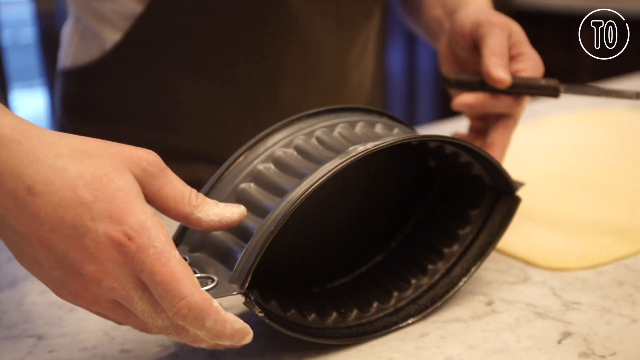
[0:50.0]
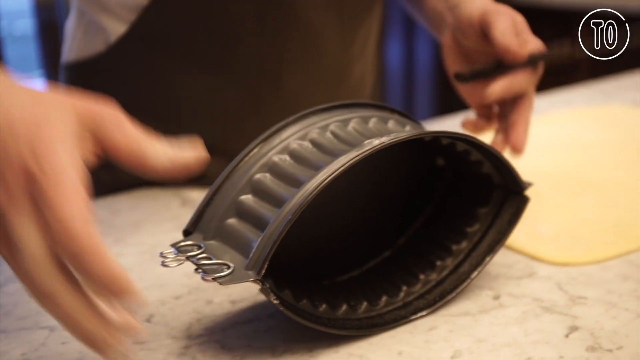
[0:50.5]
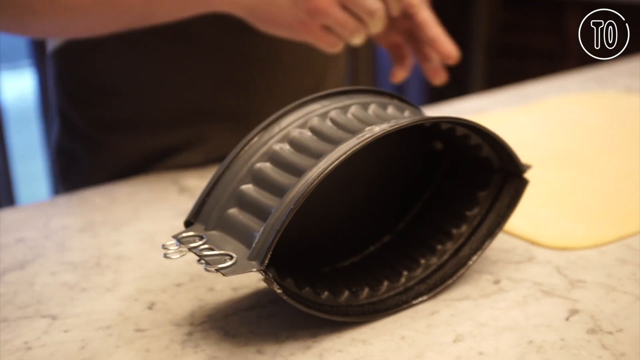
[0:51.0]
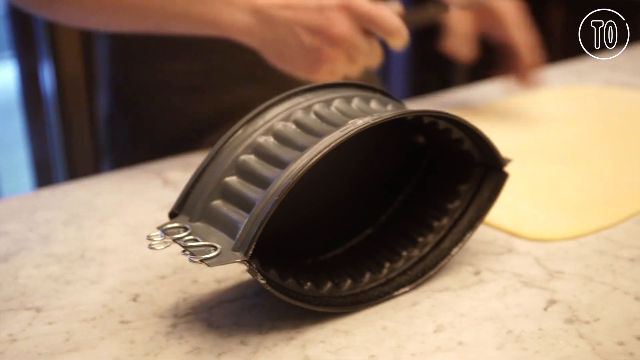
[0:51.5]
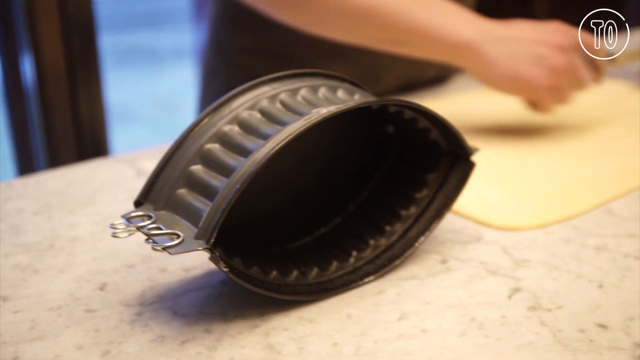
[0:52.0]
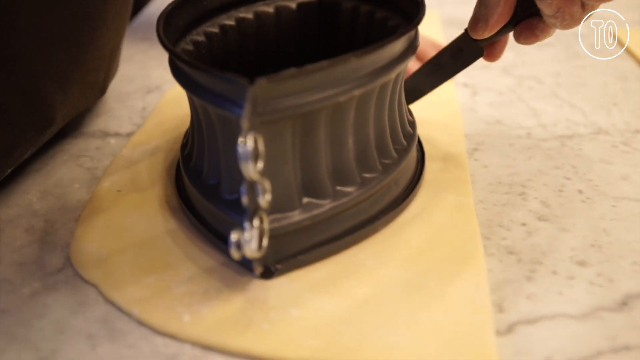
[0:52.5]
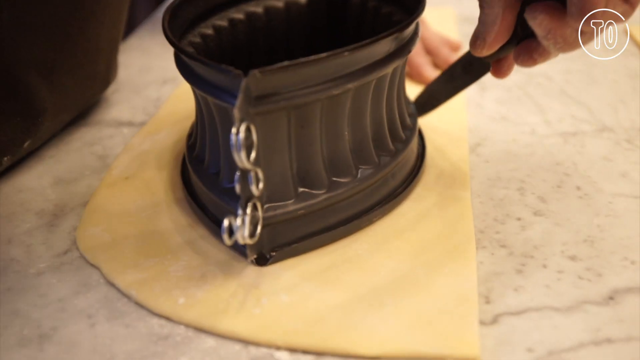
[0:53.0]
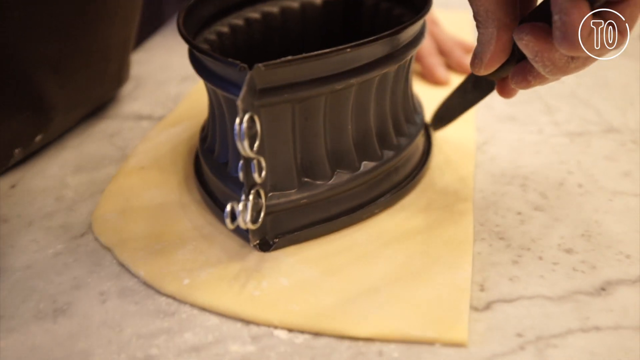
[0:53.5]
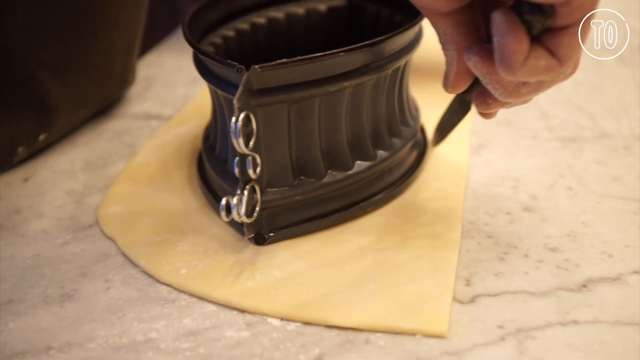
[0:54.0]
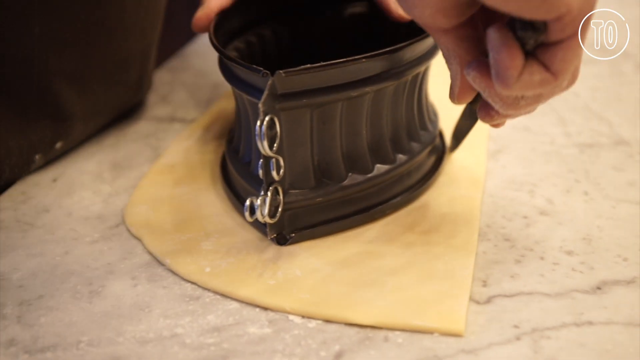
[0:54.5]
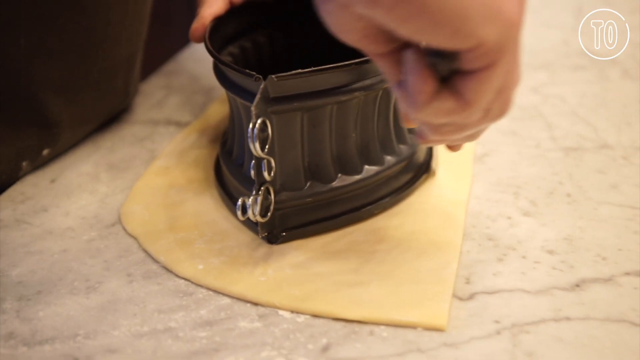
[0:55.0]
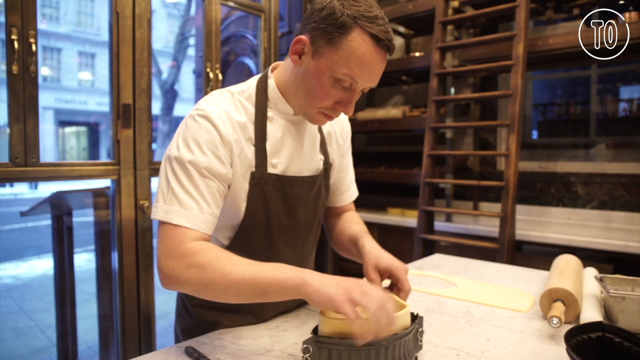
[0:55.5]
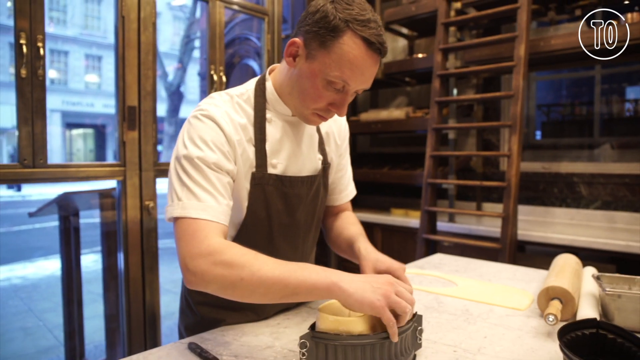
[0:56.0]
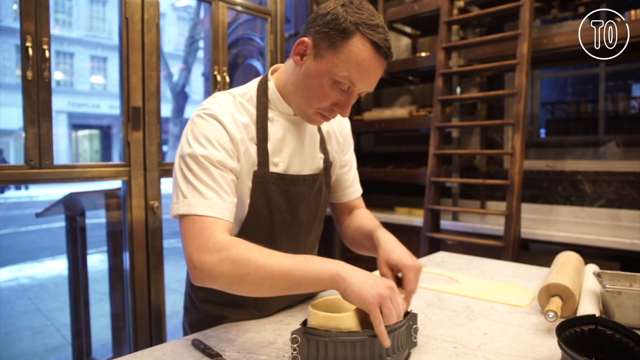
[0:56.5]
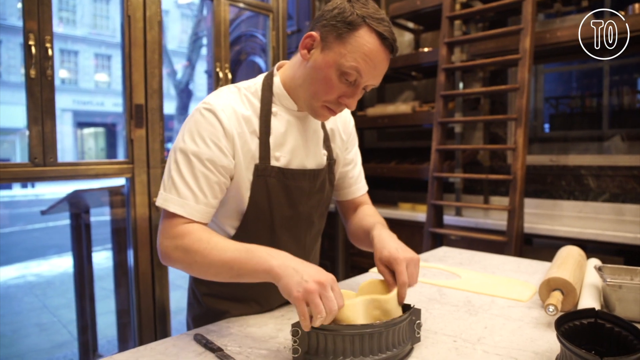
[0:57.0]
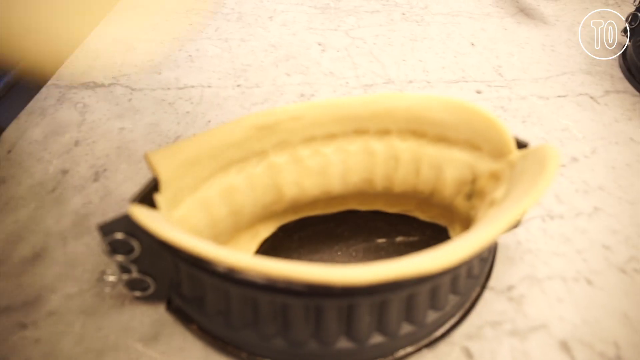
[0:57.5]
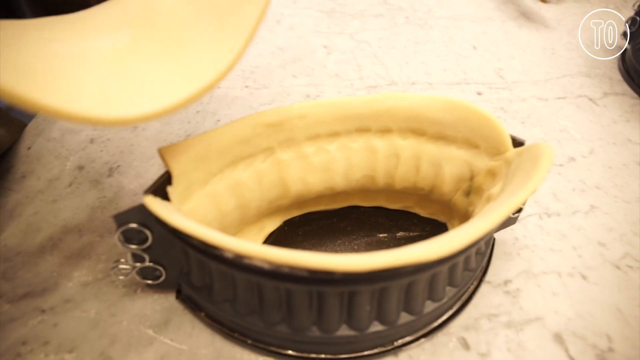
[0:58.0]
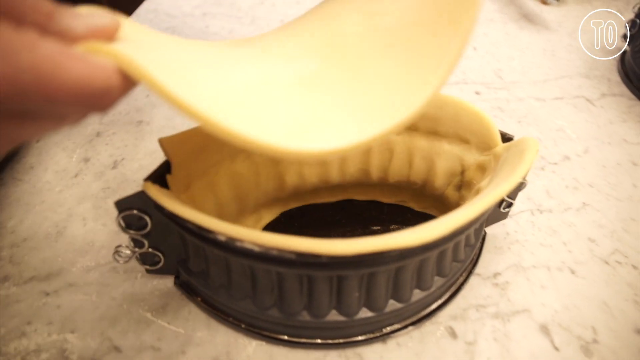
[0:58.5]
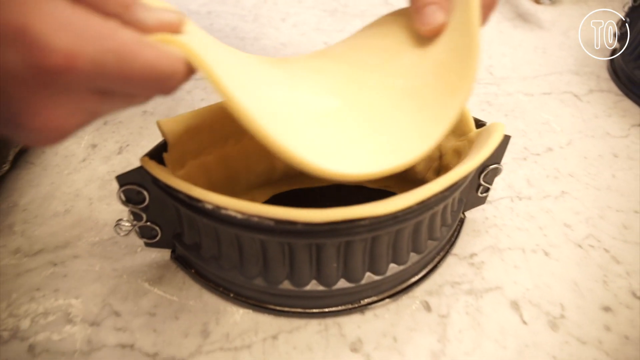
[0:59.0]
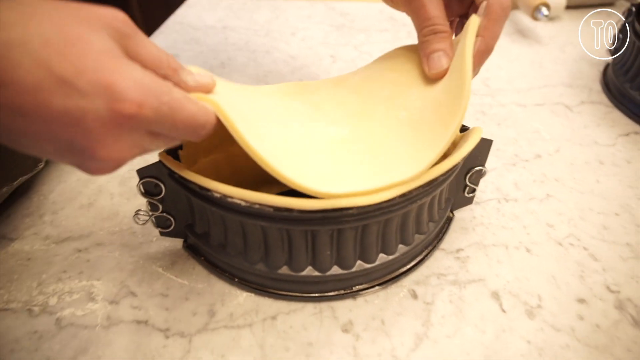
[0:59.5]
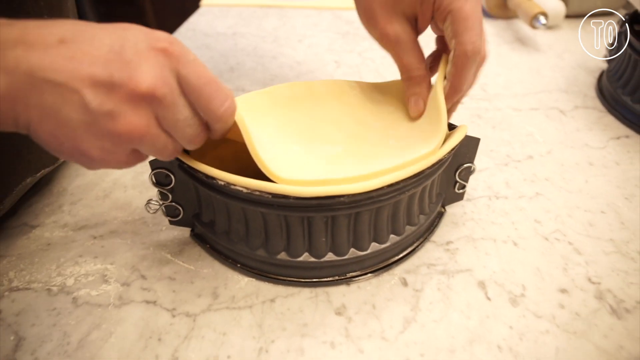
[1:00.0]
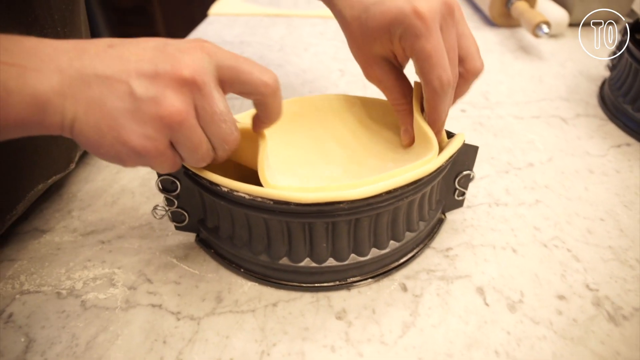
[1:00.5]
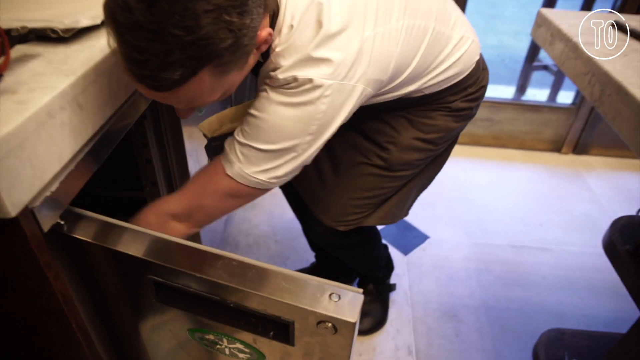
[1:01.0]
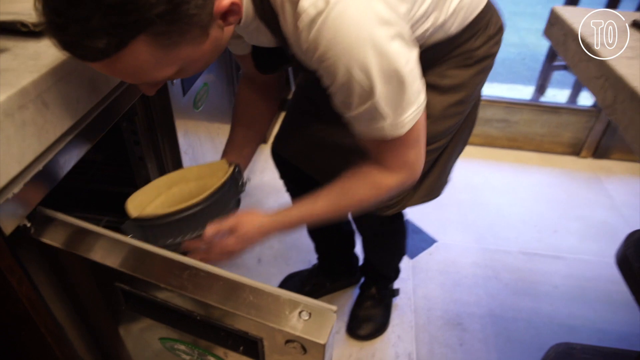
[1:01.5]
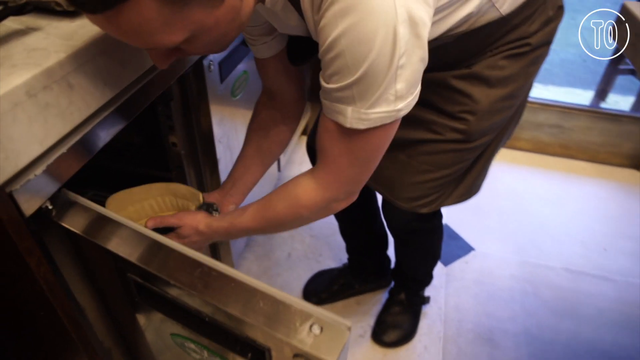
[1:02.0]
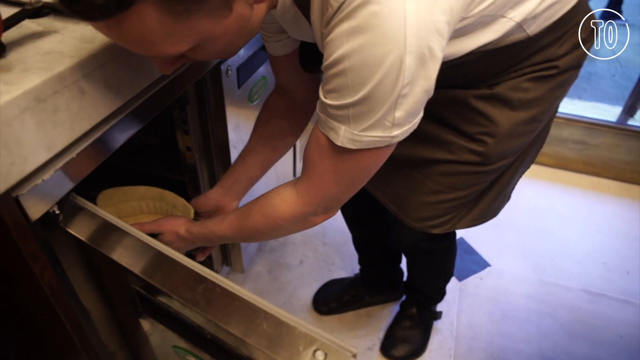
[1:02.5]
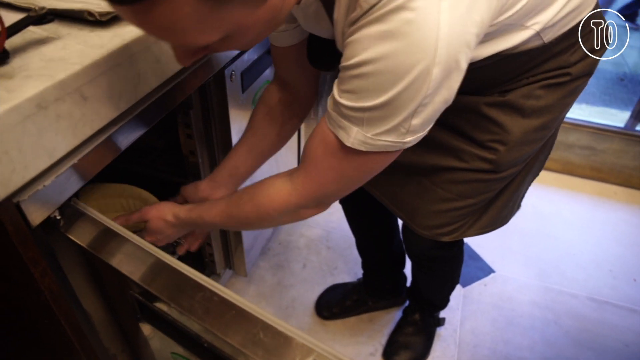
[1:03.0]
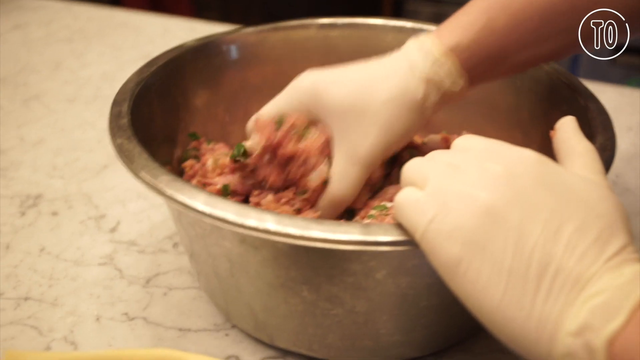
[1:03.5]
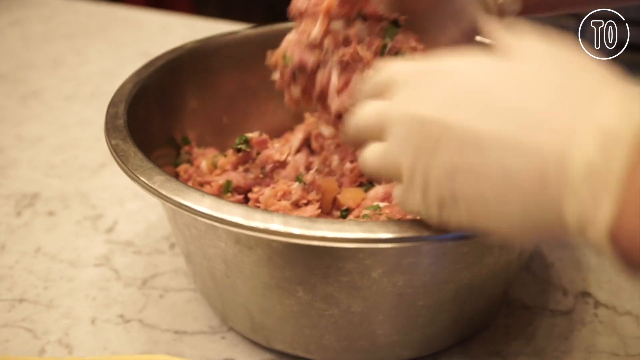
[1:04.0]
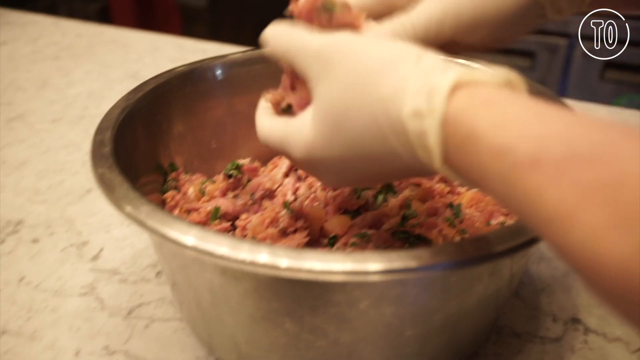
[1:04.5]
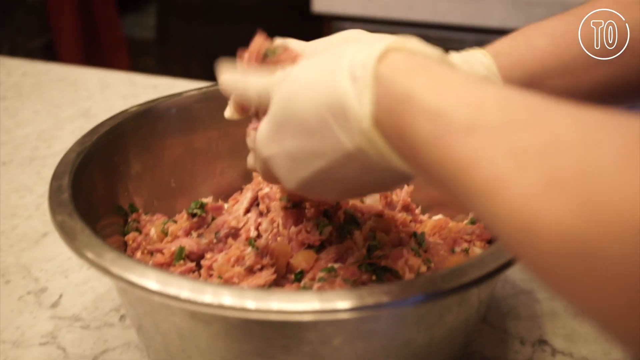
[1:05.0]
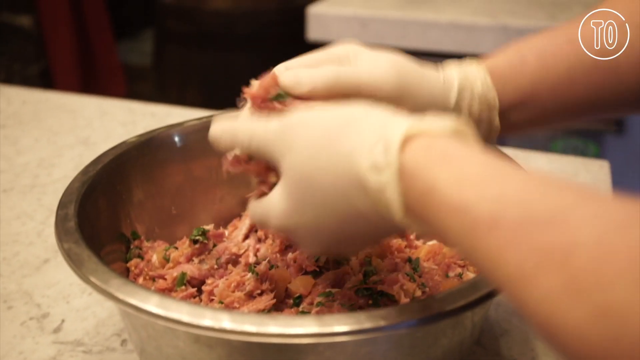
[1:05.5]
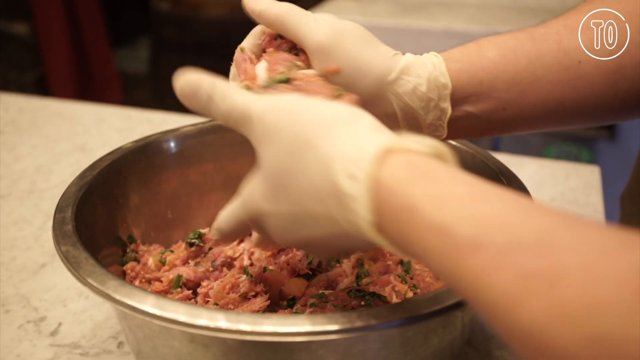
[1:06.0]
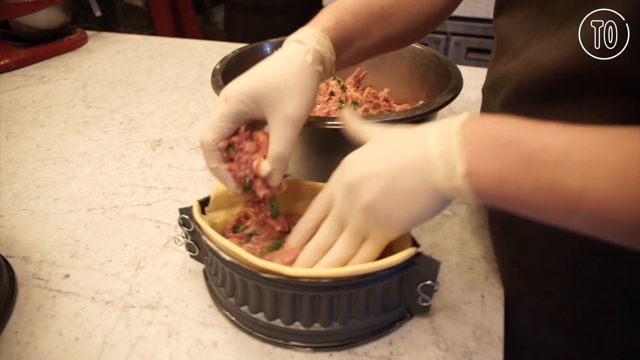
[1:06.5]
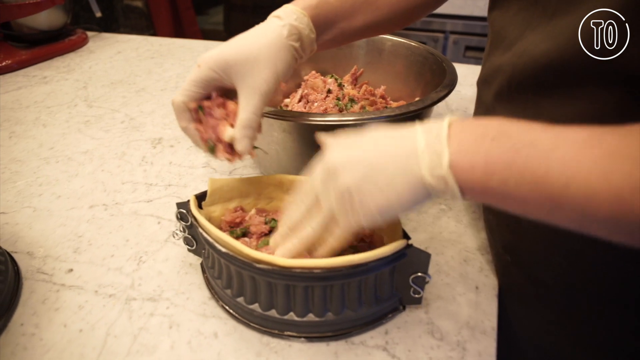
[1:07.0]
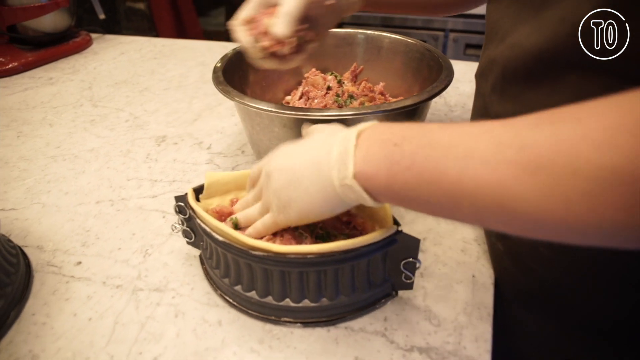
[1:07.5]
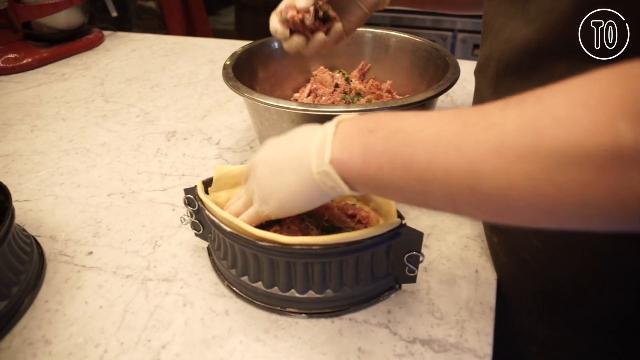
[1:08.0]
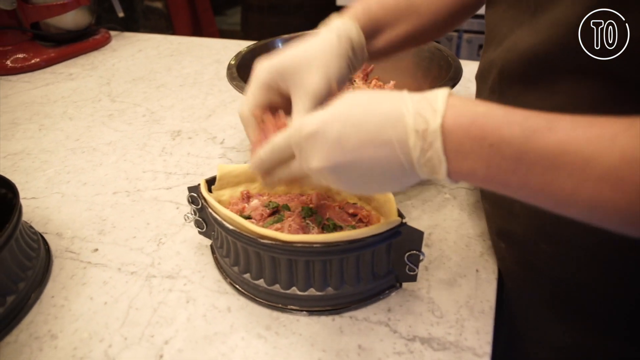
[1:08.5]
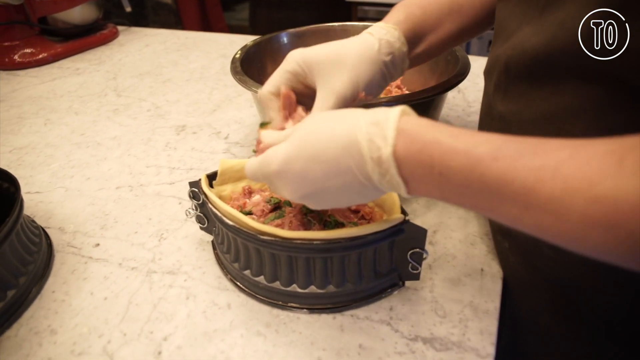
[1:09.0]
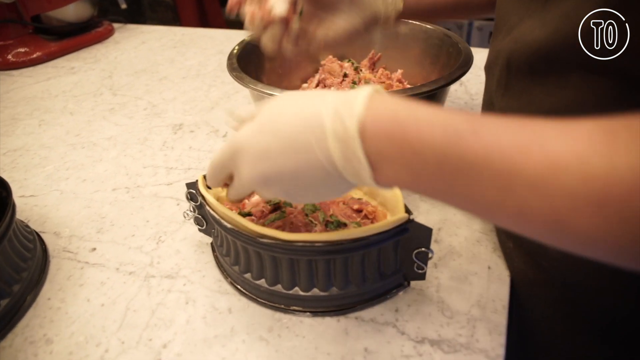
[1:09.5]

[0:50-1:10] A close-up shows a pair of hands holding some sort of metal form that looks like some sort of baking pan. A black item is held in the left hand, with the fingertips touching the form. The hands release the form onto the table, and it gently rocks from left to right. In the next scene, the form is placed standing up on what appears to be some sort of paper, and the person traces around its outer edge with a knife, holding it stable with the left hand and tracing with the right. The scene cuts to a new angle showing a baker or chef lining the inside of the cast with what appears to be dough, fitting it inside and molding it to the cast. Another cut shows him applying a flap of dough on top of the cast and fitting it into place.